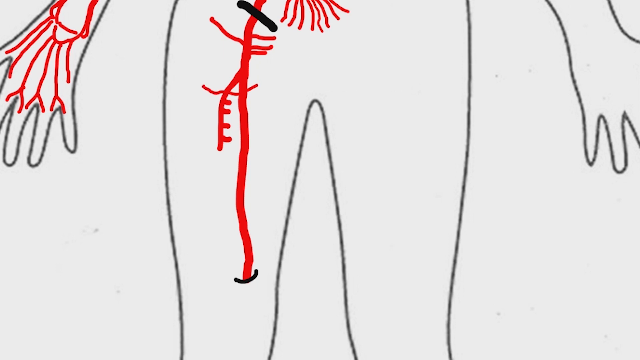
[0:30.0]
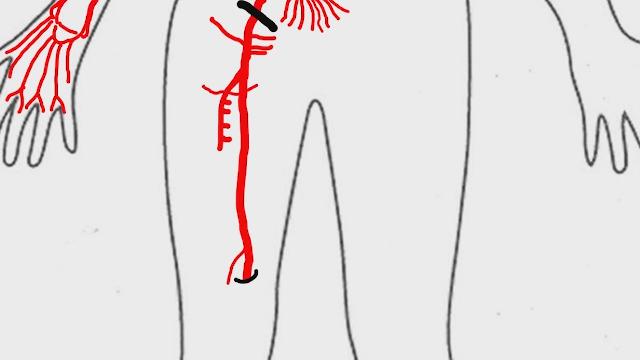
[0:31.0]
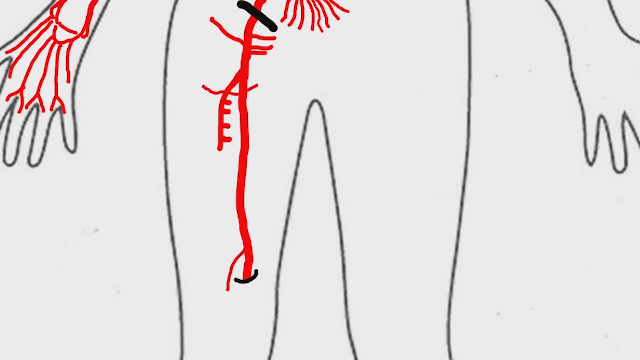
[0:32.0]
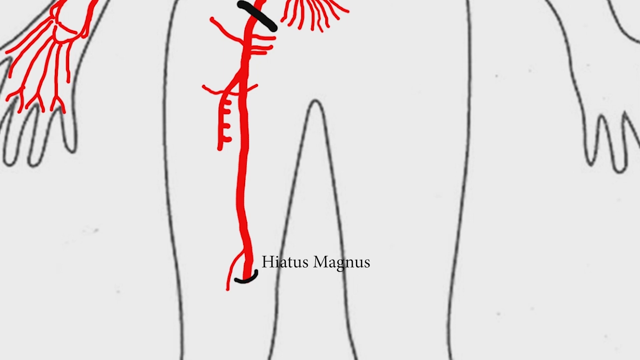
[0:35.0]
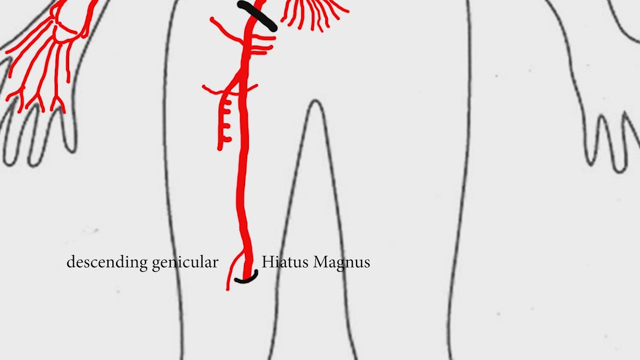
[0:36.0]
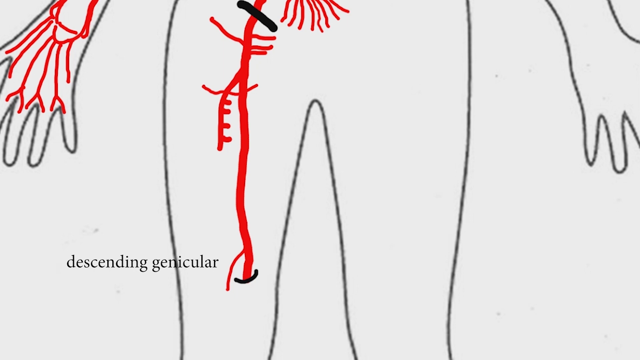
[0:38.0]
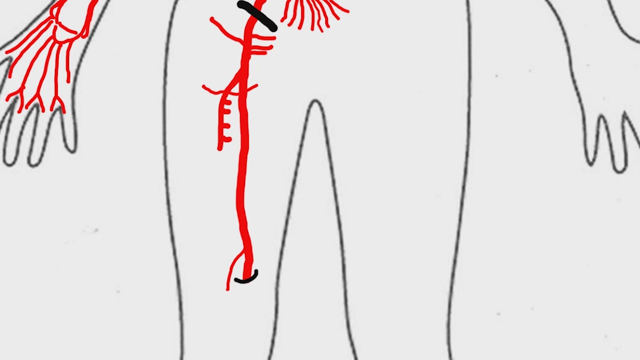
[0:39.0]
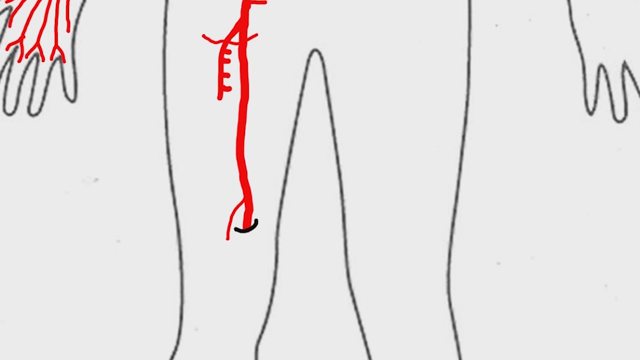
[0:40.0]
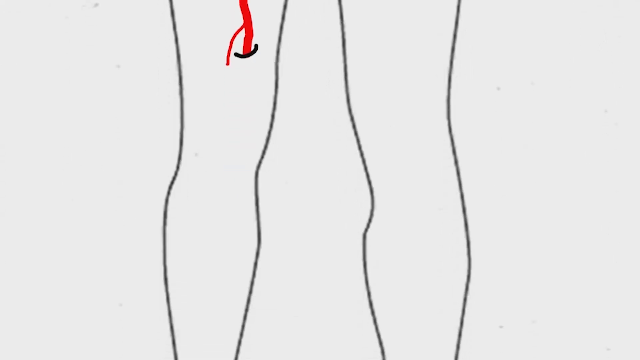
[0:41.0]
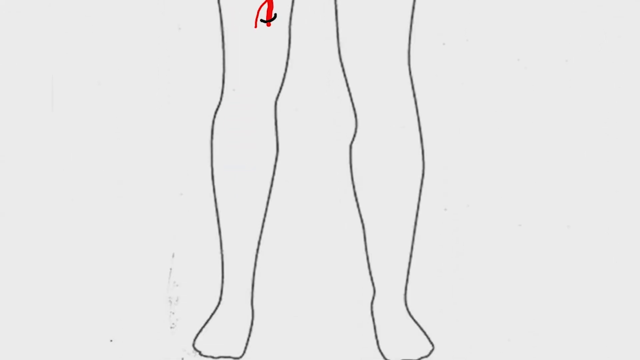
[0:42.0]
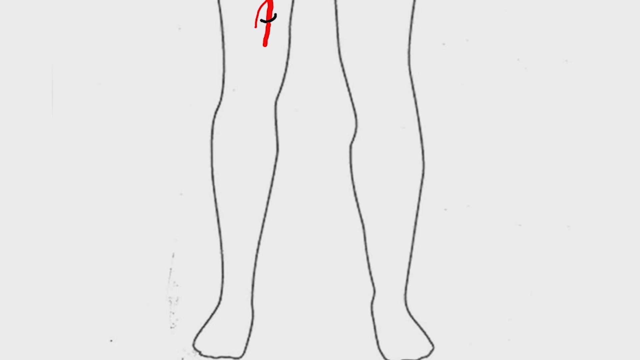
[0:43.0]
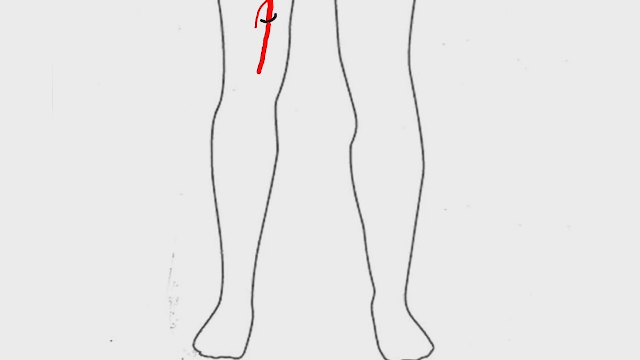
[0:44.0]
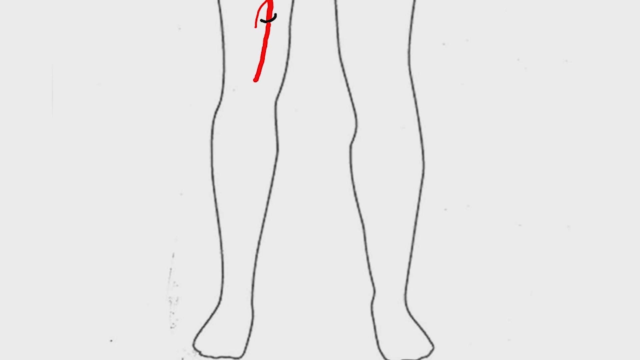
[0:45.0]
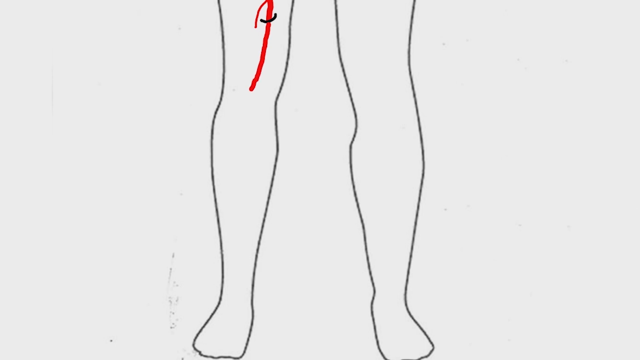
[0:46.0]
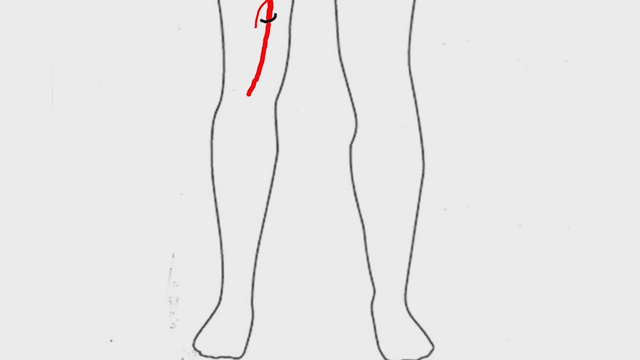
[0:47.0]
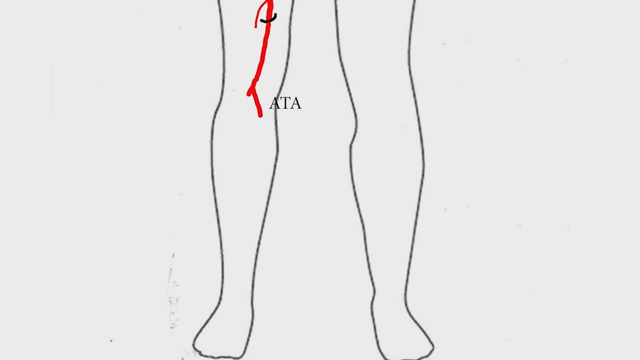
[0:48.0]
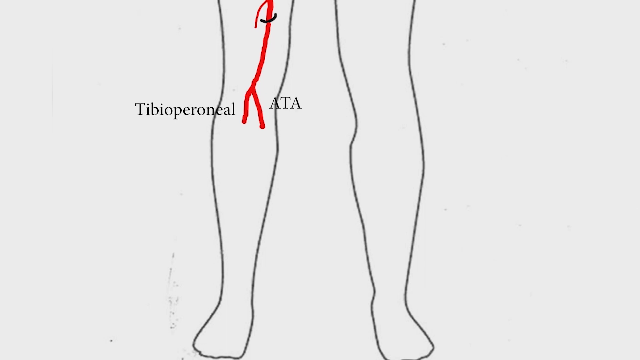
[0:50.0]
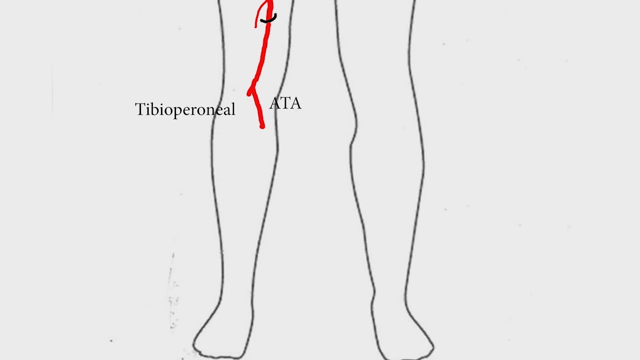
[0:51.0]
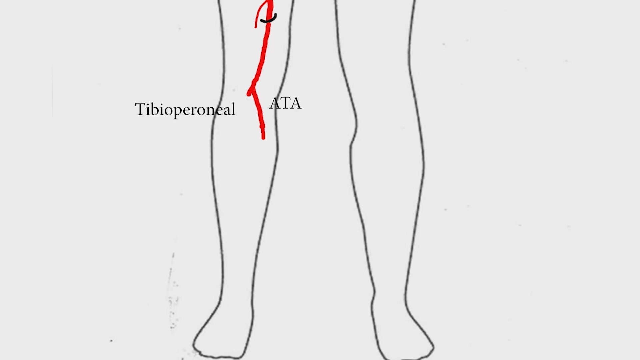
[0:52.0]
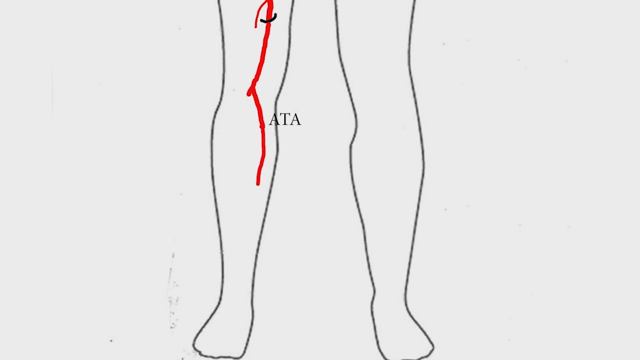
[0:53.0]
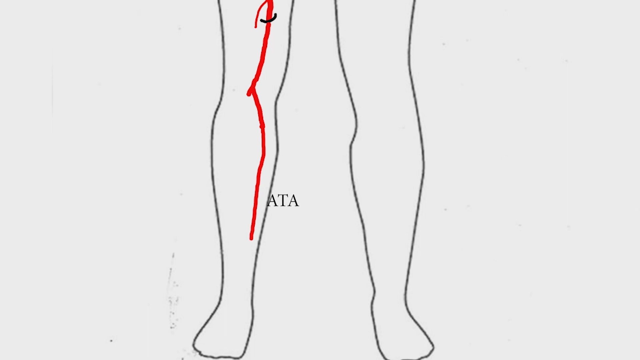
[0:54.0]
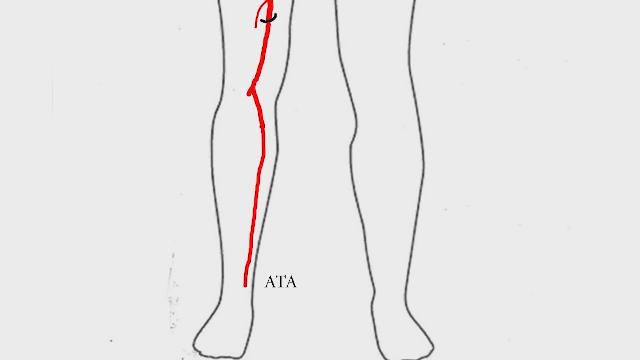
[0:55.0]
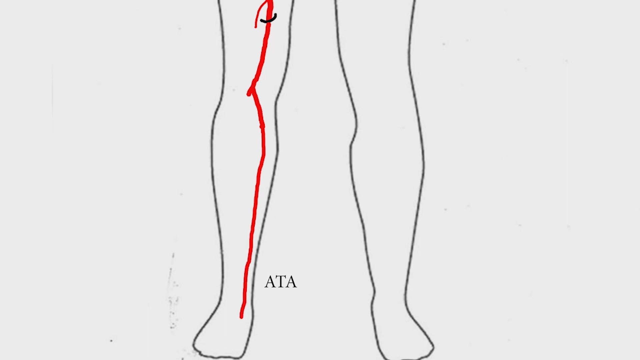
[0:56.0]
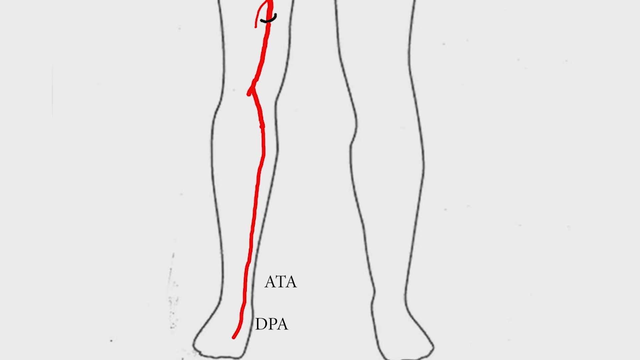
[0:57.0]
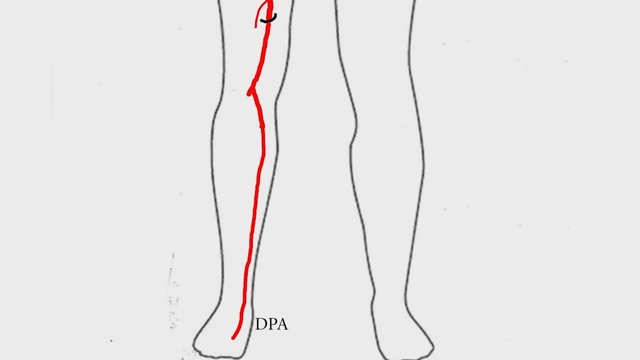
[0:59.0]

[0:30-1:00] The white background and very simple sketch of the outline of a human body continue, zoomed in on the midsection, with the right and left hands extended outside. Red lines drawn on the plain white body appear to indicate veins or arteries. Small lines extend out from the main artery that runs down the leg, and each time a medical description is given off to the side. The first says "descending gericular", and next to it is "hiatus magnus". After a couple of seconds, the camera moves down from the midsection and upper thighs to the knees and lower calves as the red line slowly makes its way down to the knee and the calf, with more medical descriptions appearing. The letters "ATA" follow down to the person's foot, where another acronym is given.